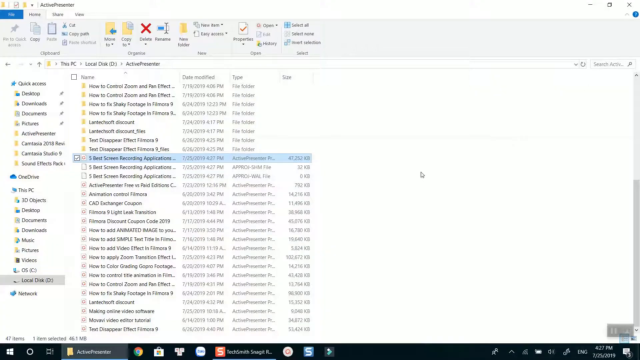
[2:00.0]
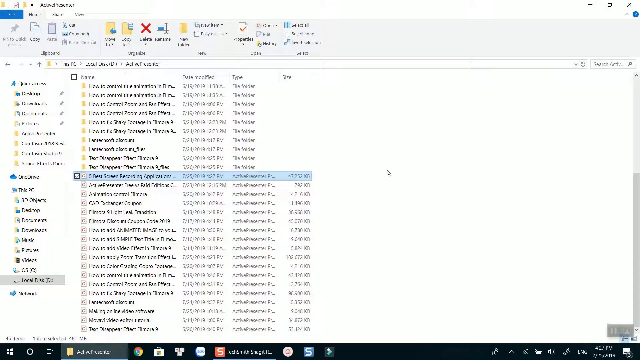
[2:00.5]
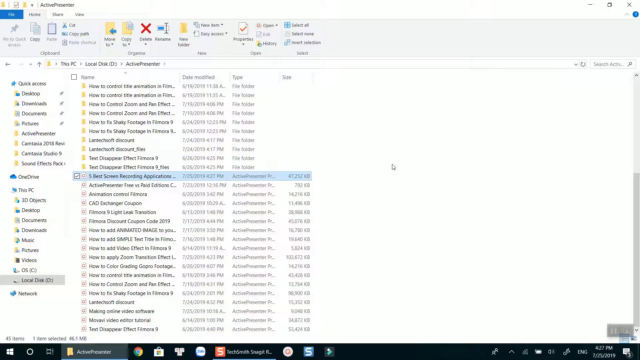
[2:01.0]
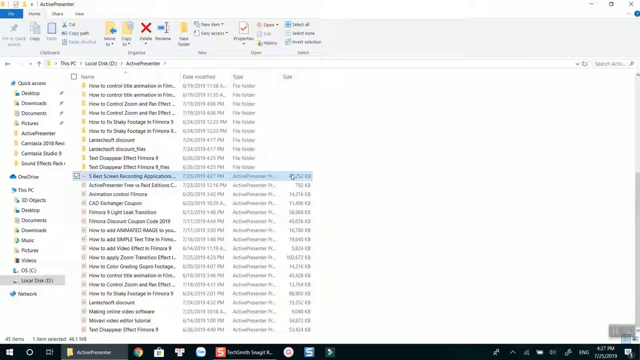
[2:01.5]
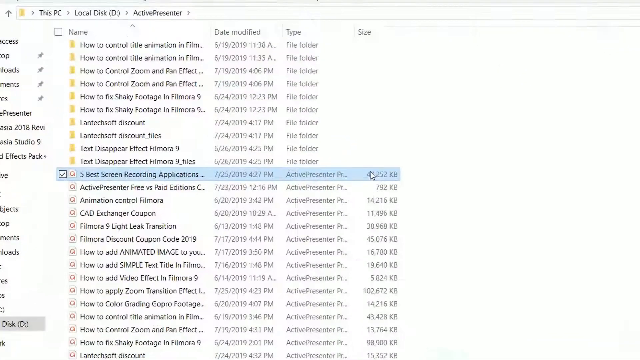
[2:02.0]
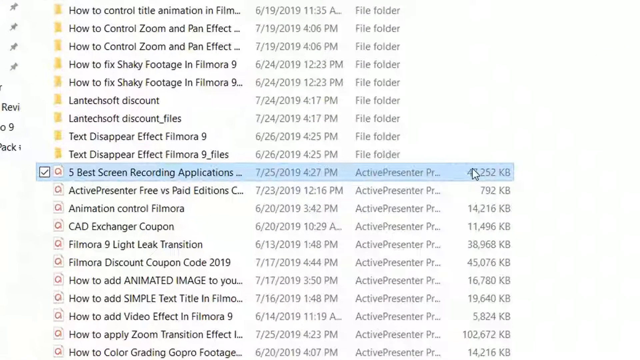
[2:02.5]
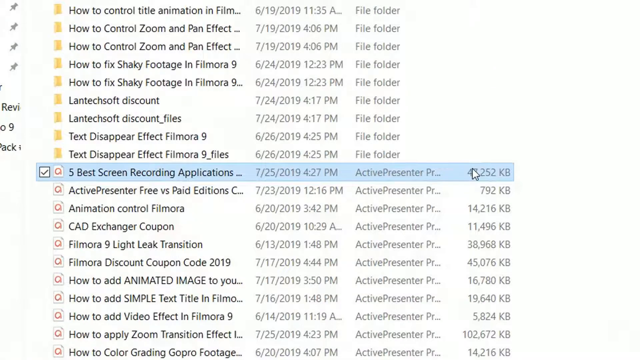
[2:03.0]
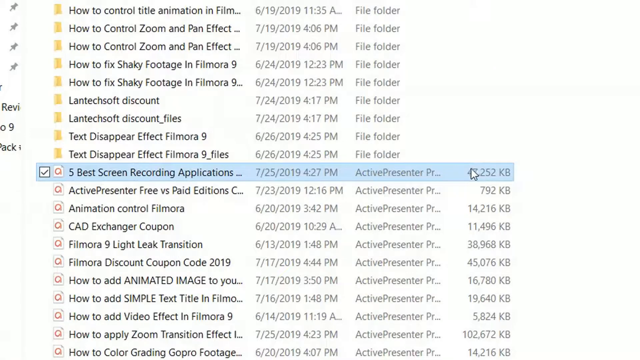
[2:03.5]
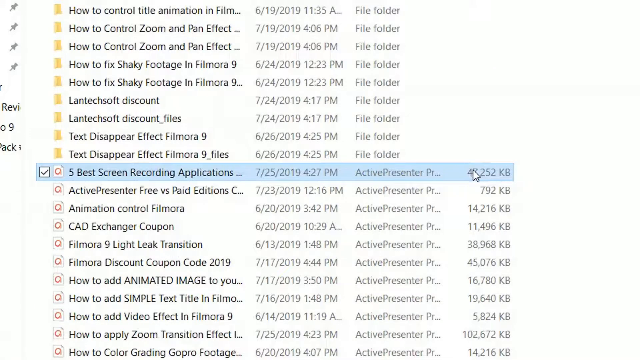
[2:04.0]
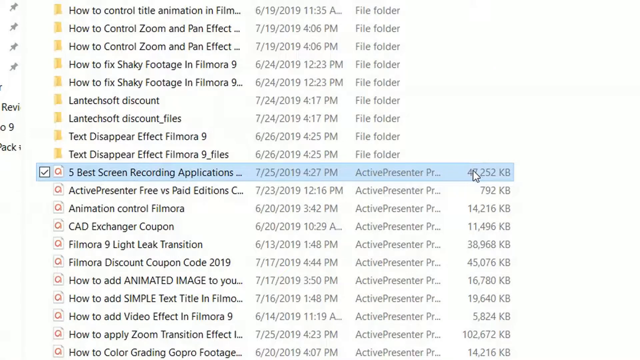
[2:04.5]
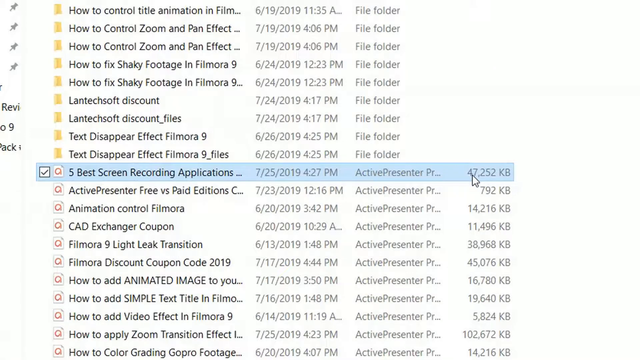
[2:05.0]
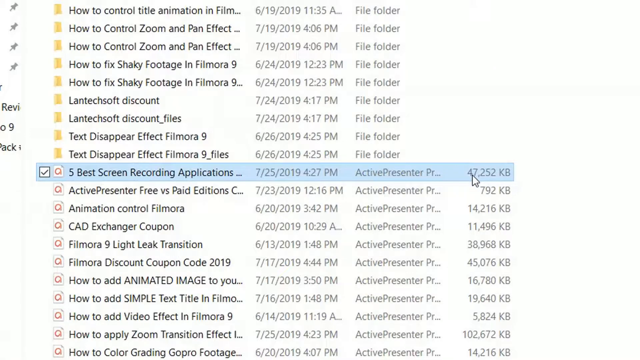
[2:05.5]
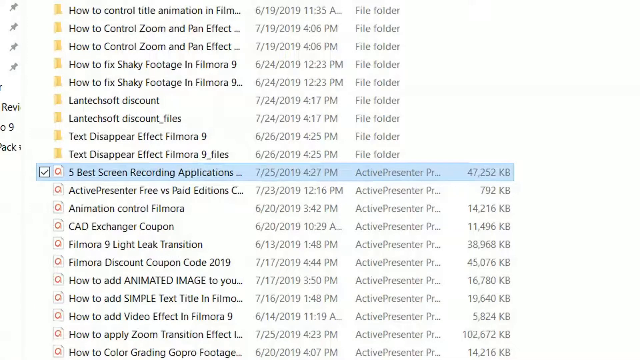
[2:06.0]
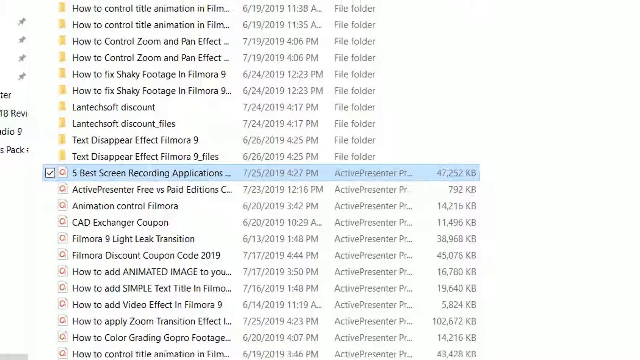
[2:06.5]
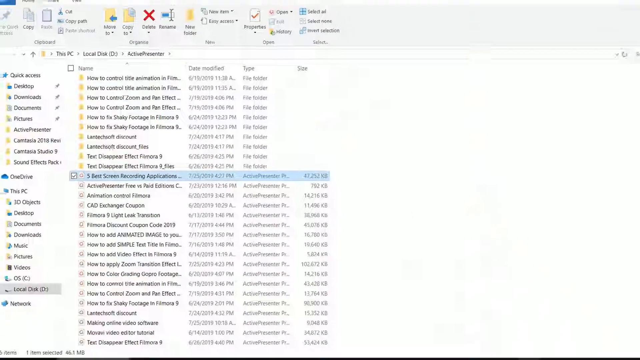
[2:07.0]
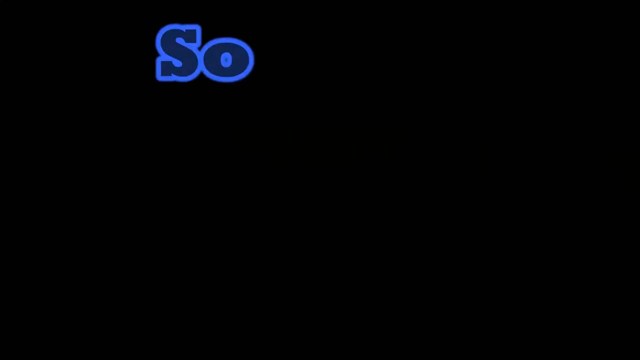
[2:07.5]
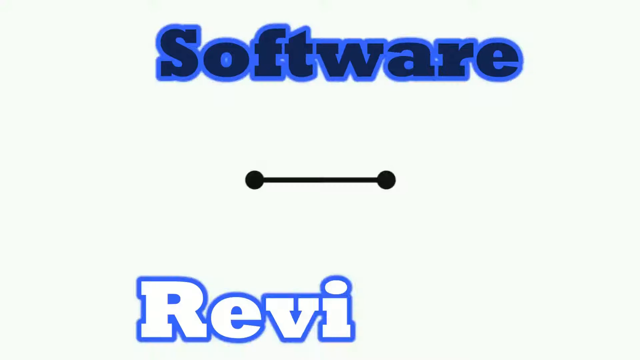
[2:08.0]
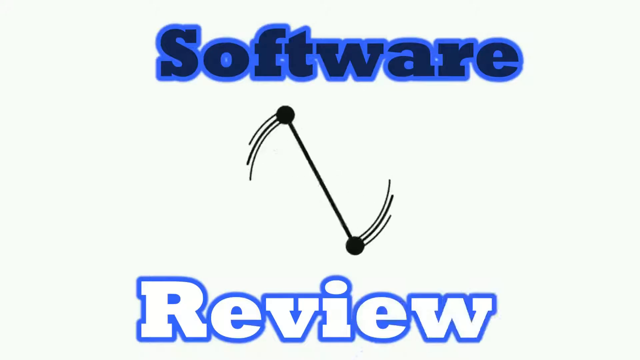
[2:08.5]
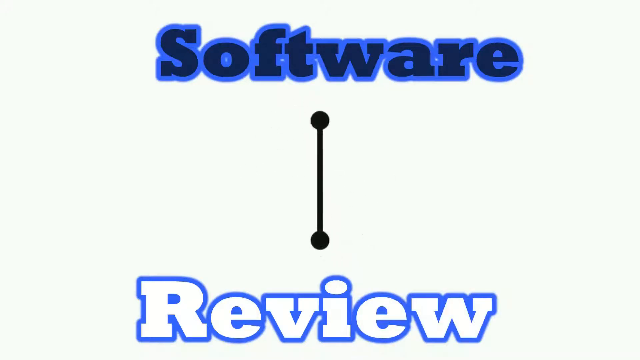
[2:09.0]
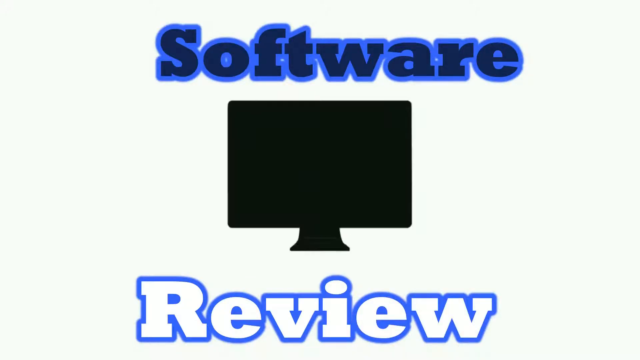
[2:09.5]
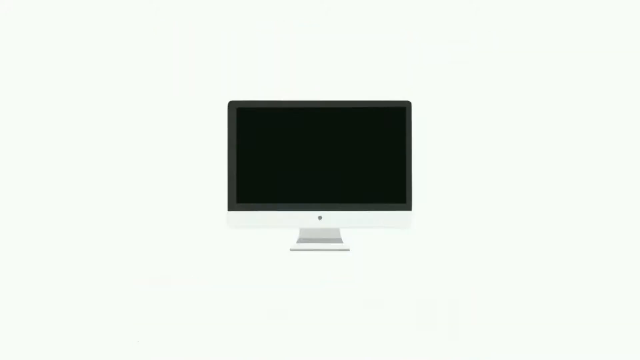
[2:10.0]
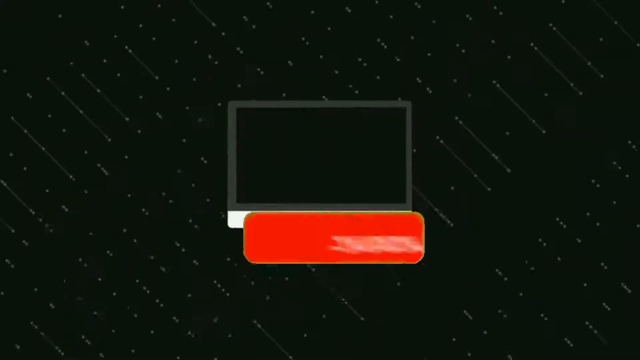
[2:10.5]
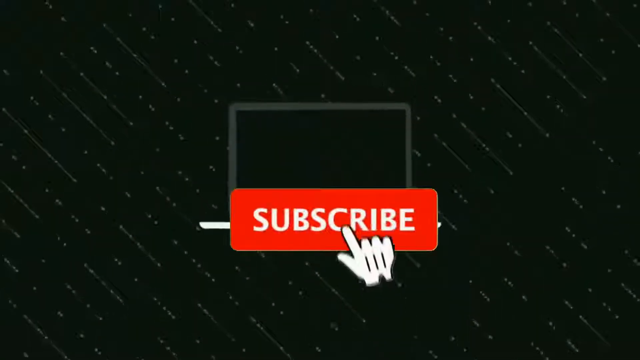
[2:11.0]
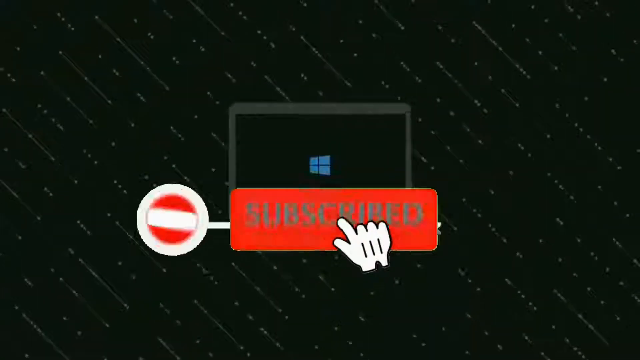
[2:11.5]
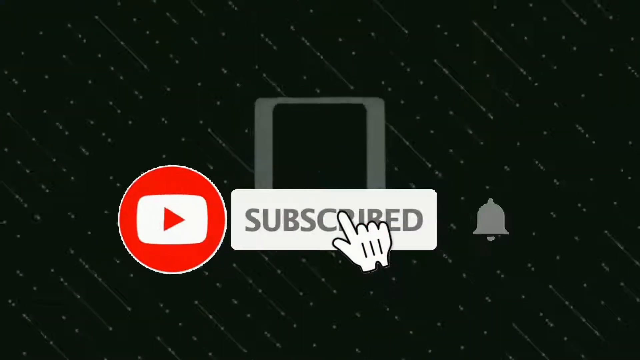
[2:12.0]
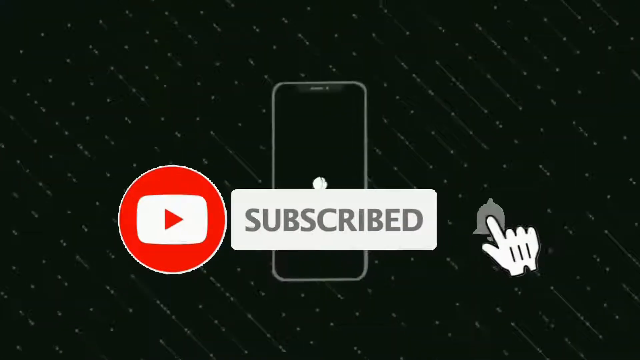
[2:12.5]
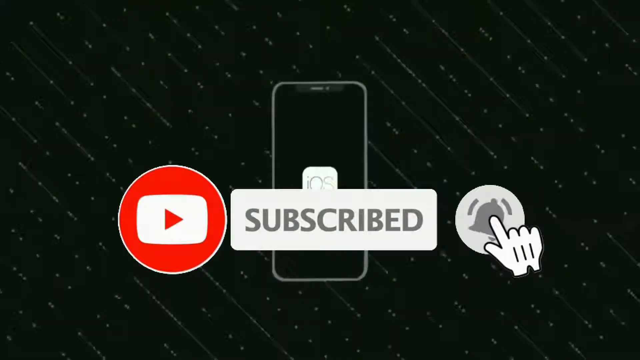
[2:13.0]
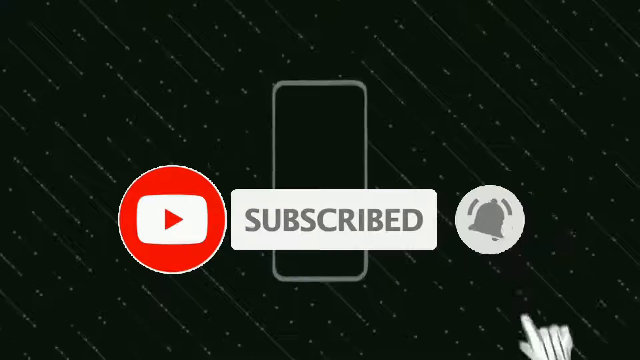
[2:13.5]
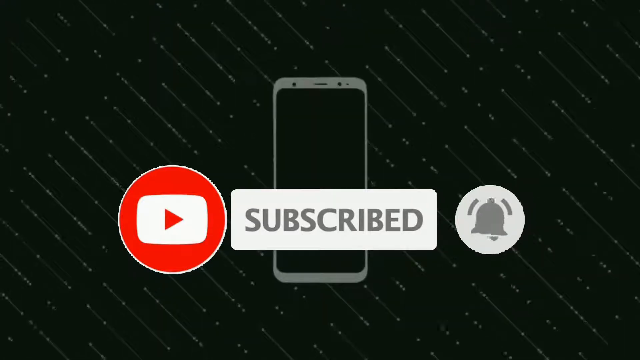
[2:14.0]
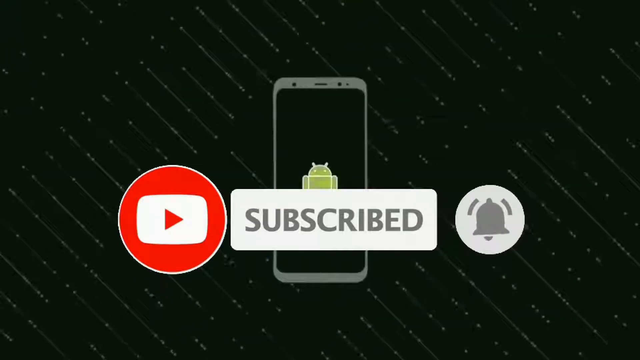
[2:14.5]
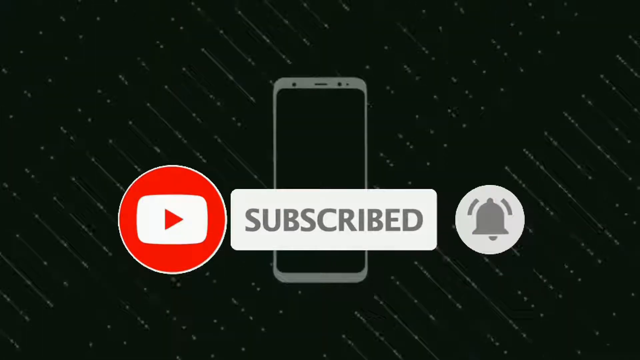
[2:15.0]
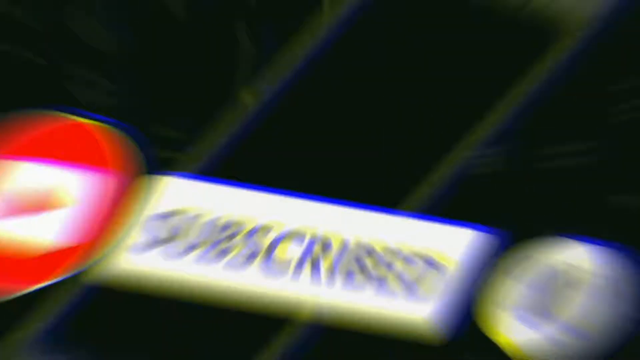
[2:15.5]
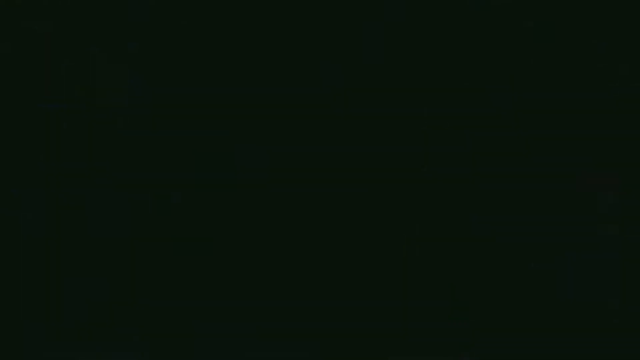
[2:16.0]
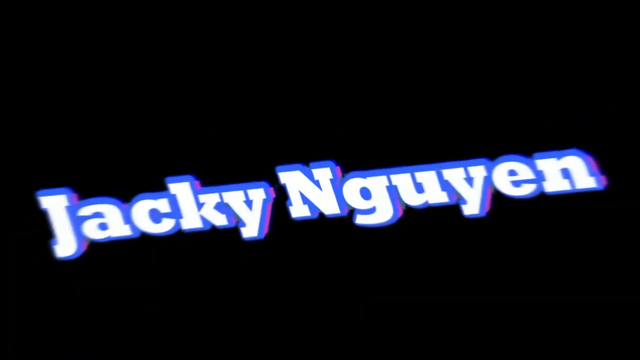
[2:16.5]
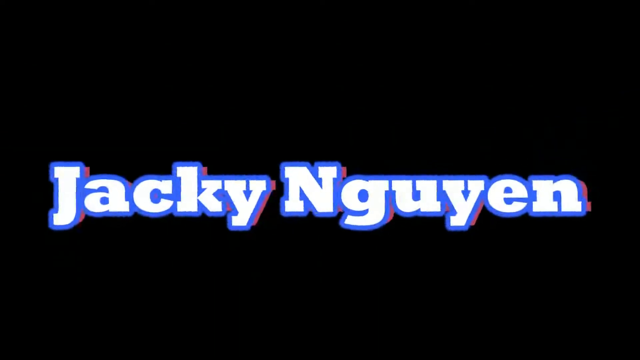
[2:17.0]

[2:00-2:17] The file system zooms in a little, making more files and folders visible. "5 best screen recording applications" is selected in light blue. At the very top, above it, are folders: "how to control title animation in film," "how to control zoom and pan effect" twice, "how to fix shaky footage in Filmora" and a duplicate, "Lantex Soft Discount," "Lantex Soft Discount_files," "Text Disappear Effect Filmora 9," and "Text Disappear Effect Filmora 9_files." Below them appear to be many Active Presenter files. Just below "five best screen recordings" the list reads "Active Presenter Free vs. Paid Editions Animation Control Filmora, CAD Exchanger Coupon Filmora 9 Light Leak Transition Filmora Discount Coupon Code 2019," followed by "How to add simple text title in Filmora" and "How to add video effect in Filmora 9." The view then zooms out and "software review" appears on screen.